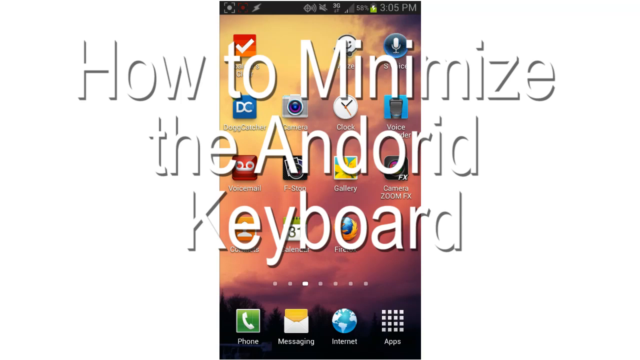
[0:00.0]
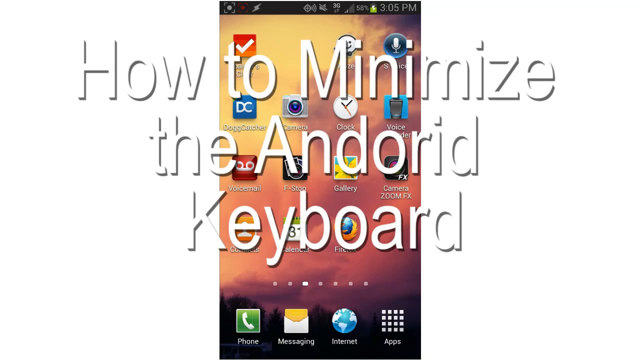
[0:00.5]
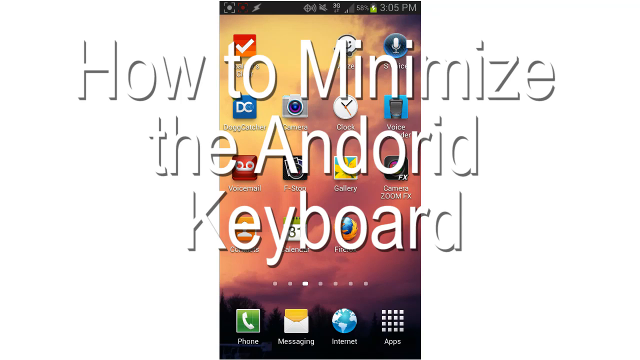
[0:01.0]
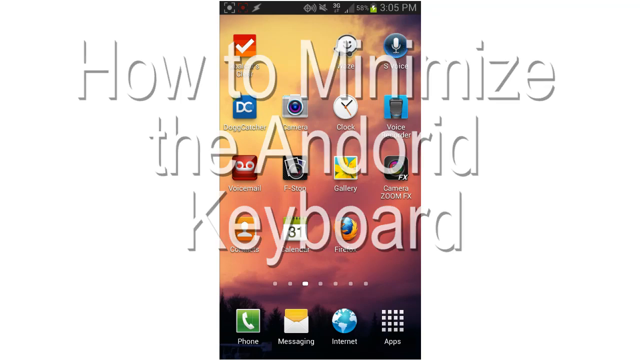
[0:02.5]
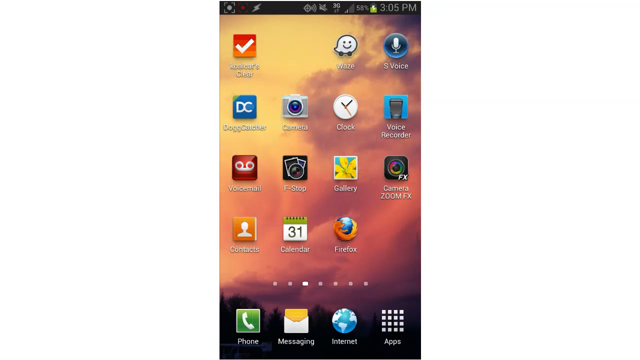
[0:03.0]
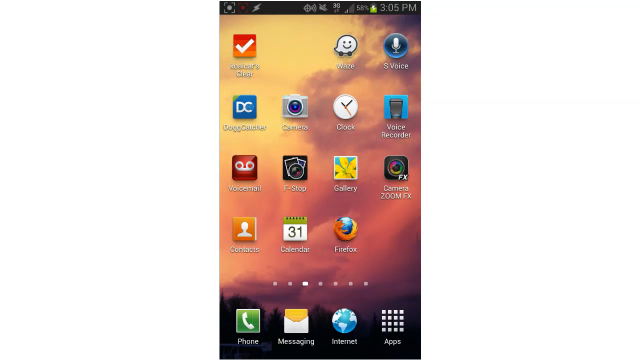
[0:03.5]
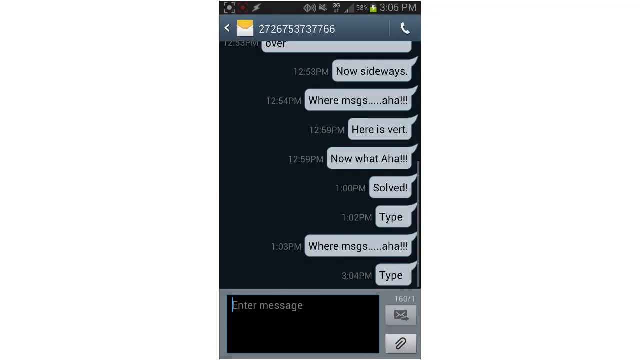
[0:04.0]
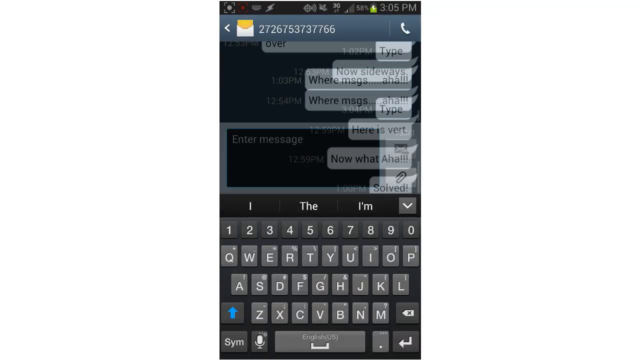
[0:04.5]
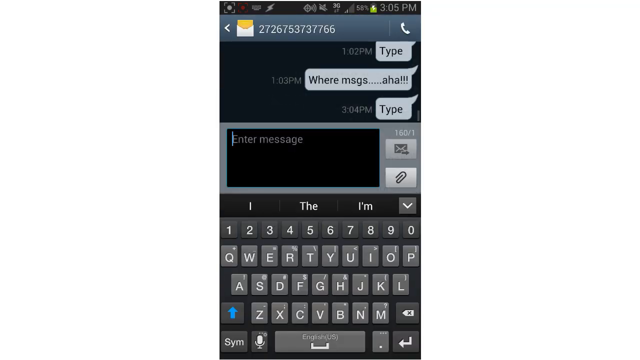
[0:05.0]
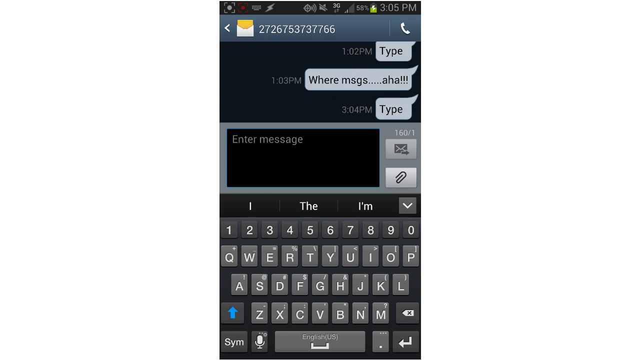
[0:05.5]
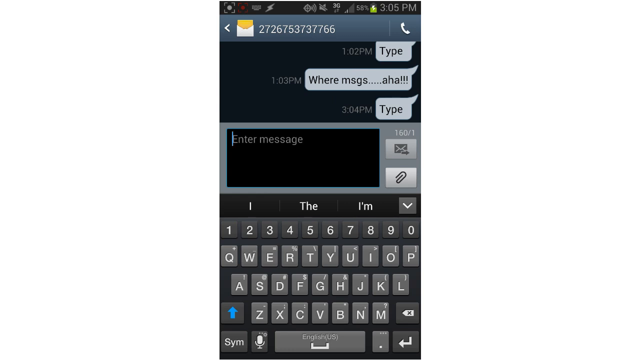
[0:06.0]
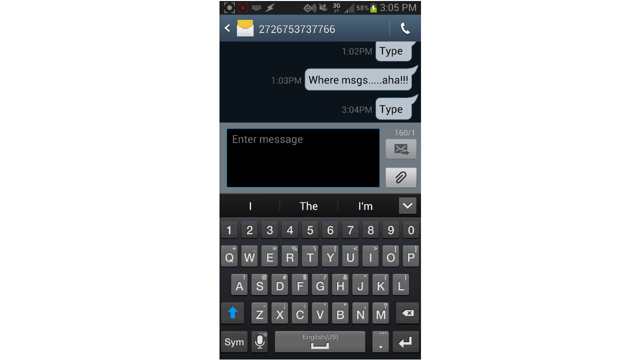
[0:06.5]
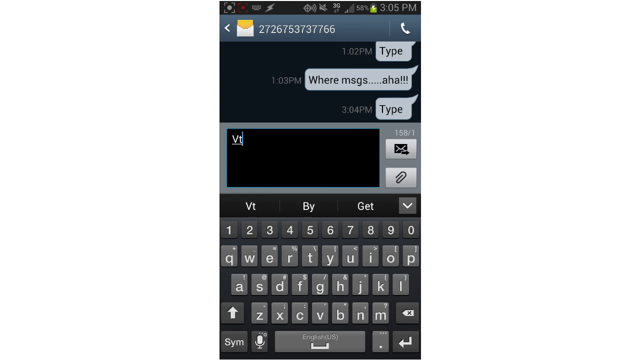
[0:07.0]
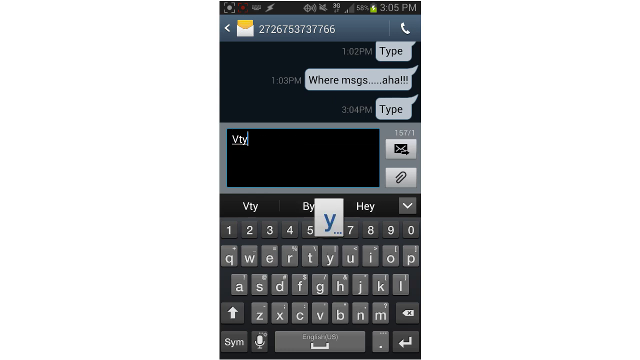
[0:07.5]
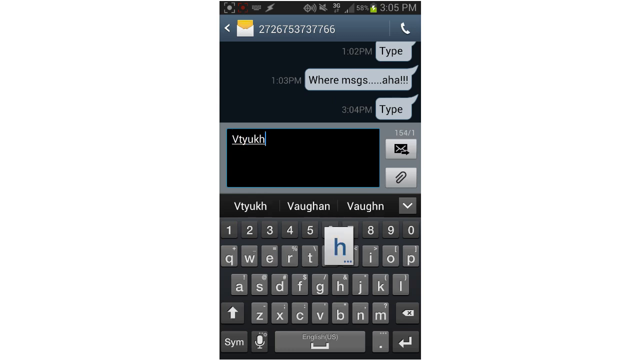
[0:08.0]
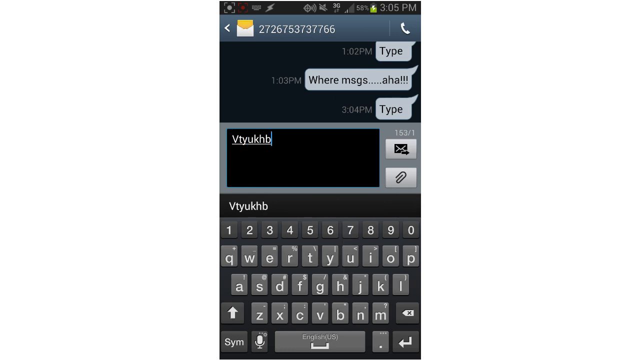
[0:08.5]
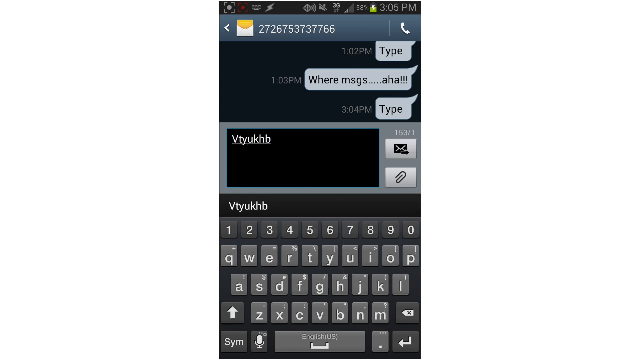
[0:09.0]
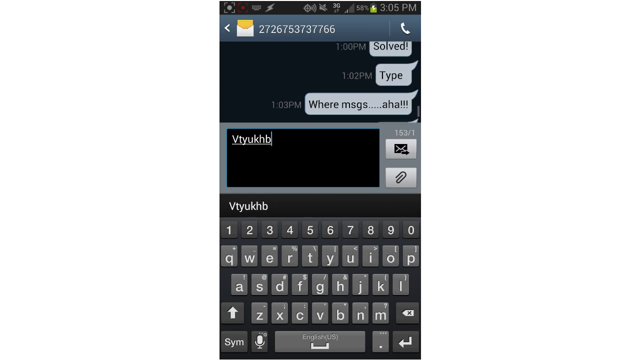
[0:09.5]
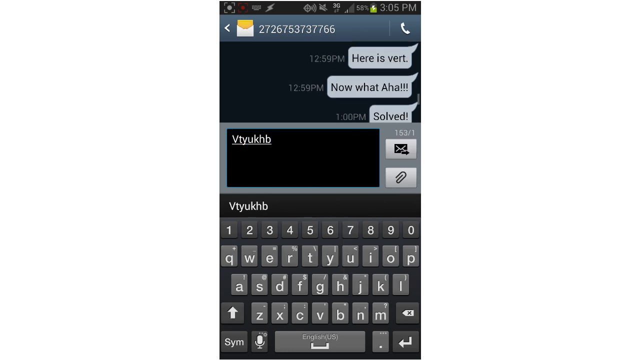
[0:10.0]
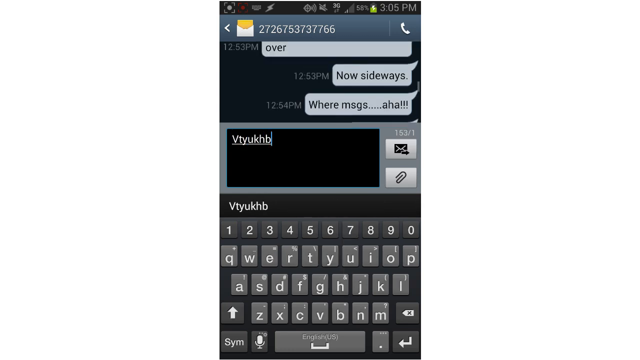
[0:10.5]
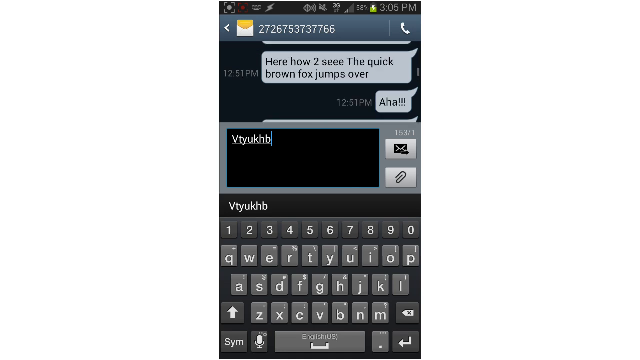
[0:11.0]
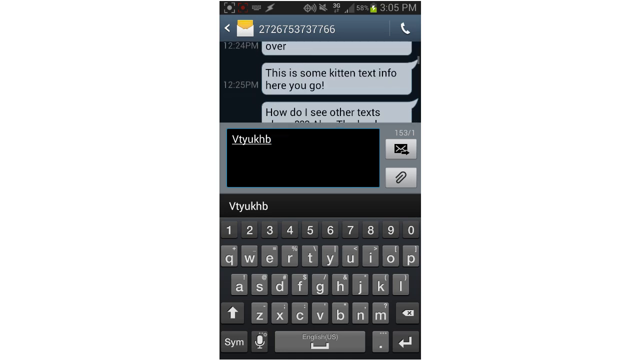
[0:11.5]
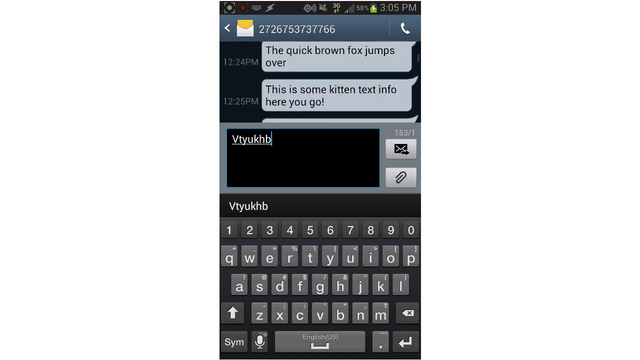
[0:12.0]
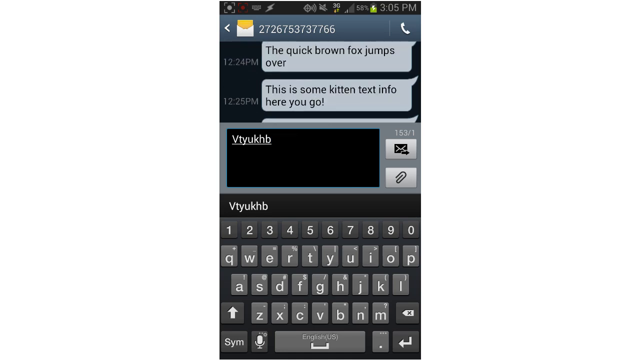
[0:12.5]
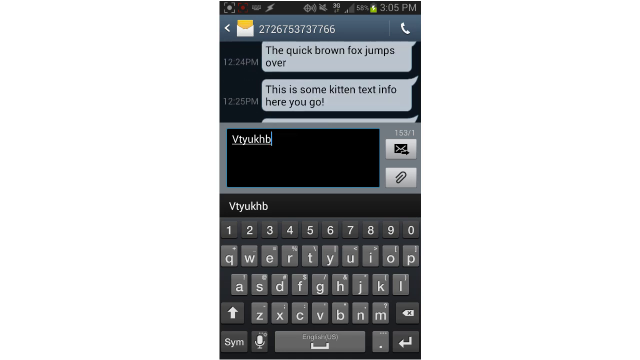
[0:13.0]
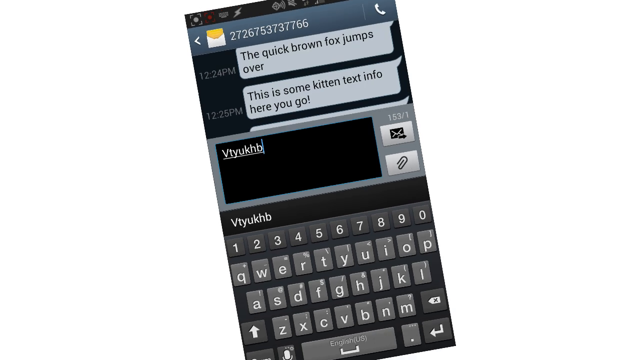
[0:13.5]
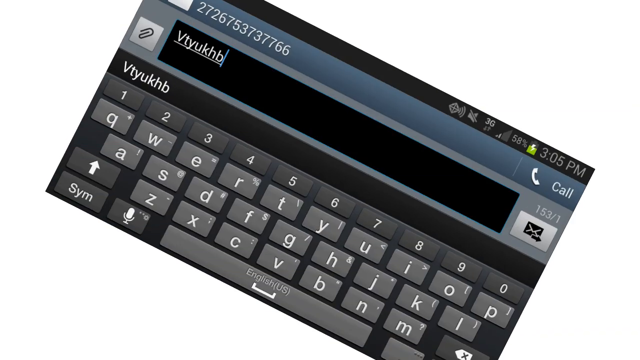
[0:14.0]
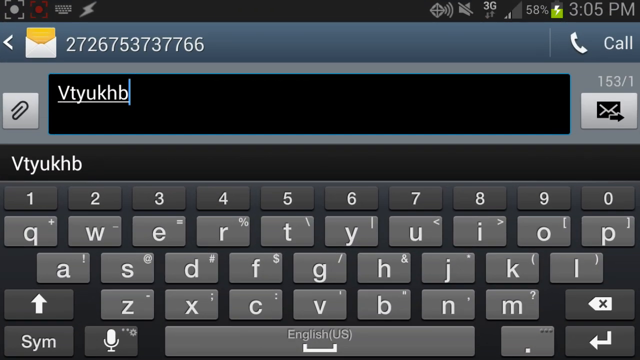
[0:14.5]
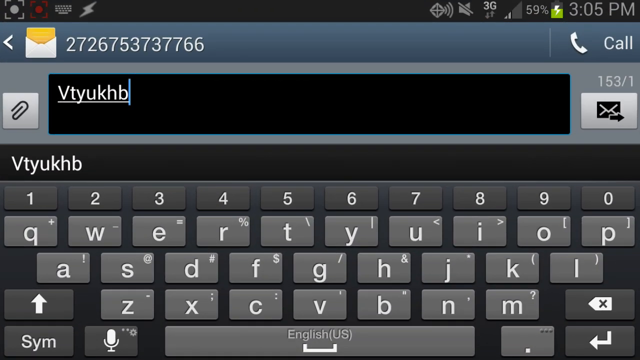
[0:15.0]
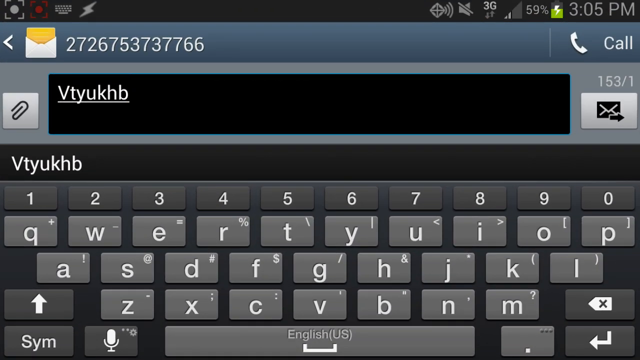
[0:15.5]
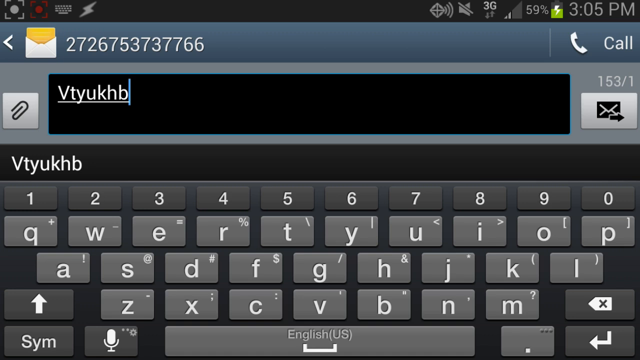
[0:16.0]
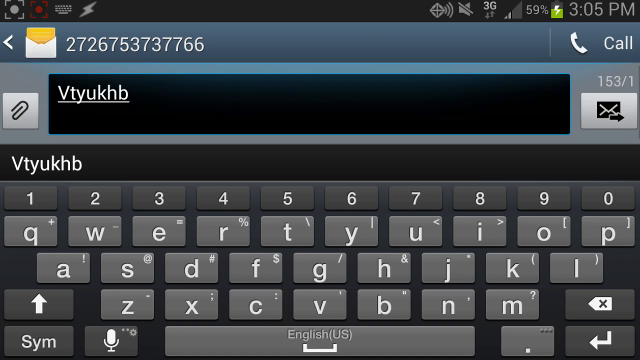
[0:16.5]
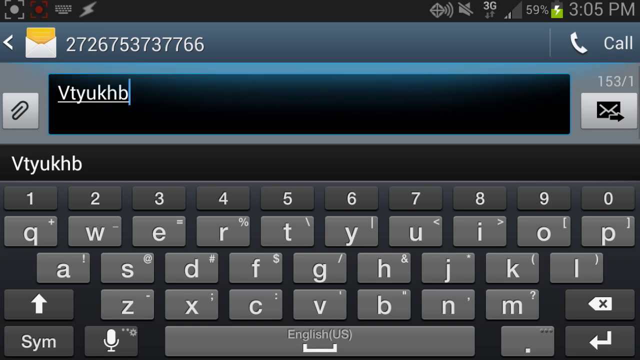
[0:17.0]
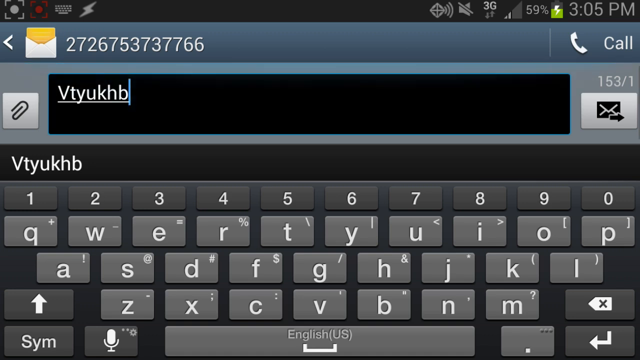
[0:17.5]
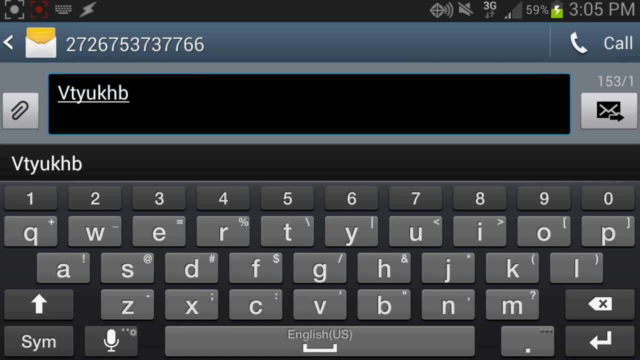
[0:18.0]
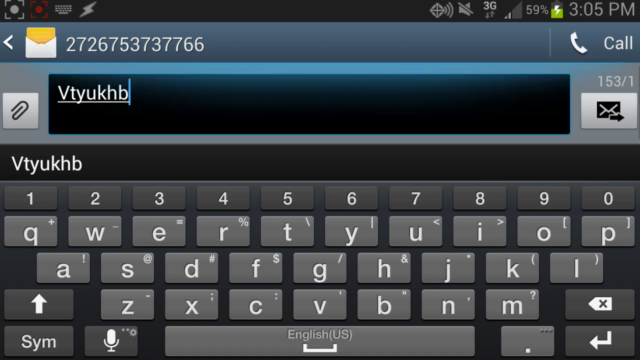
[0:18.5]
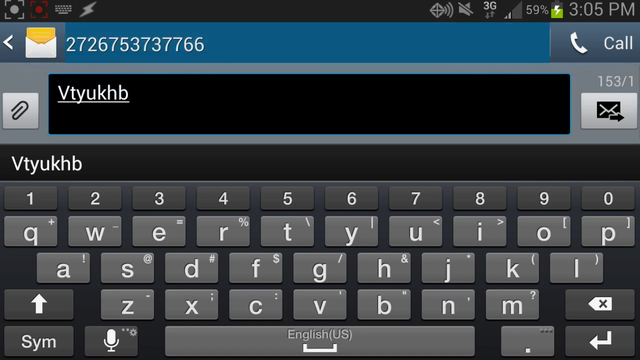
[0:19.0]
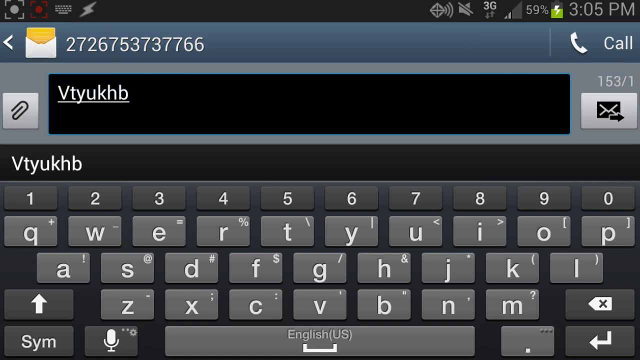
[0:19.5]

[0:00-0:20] The video opens with the title text "how to minimize the onscreen Android keyboard." A screen recording then opens what appears to be a text messaging app, and the keyboard is brought up. The phone's screen is rotated from vertical to horizontal and text is entered; there is sample text, something like "the quick brown fox jumps over" typing-practice text. The keyboard stays up after the orientation changes. When the screen goes horizontal, an edited transition shifts the video to a much larger view that fills more of the space, with a slow pan to the left followed by a zoom in, apparently added in editing rather than by the phone itself.